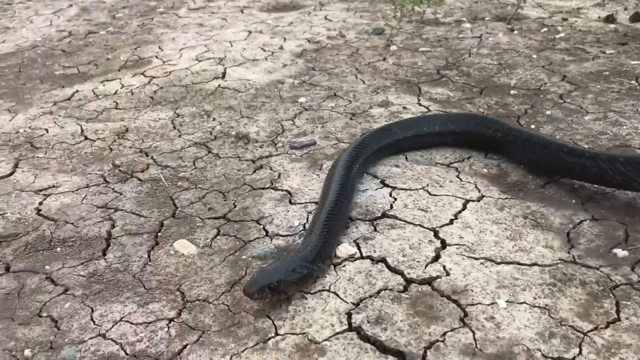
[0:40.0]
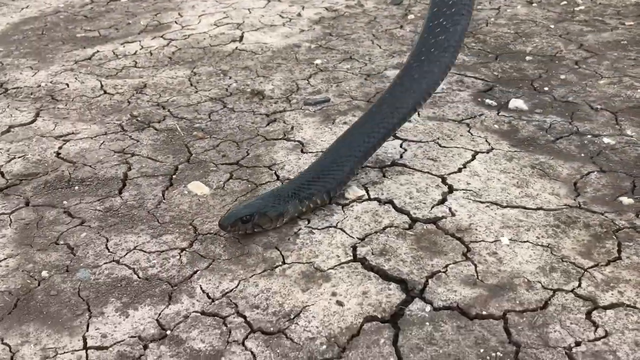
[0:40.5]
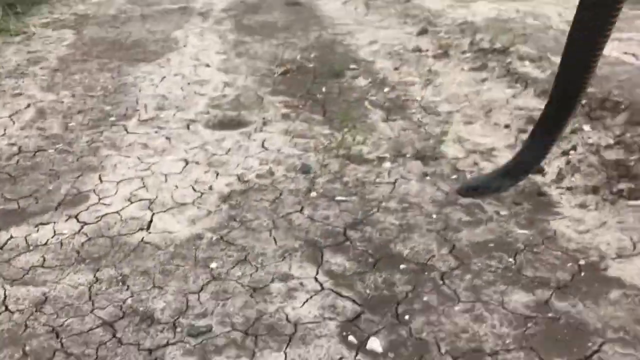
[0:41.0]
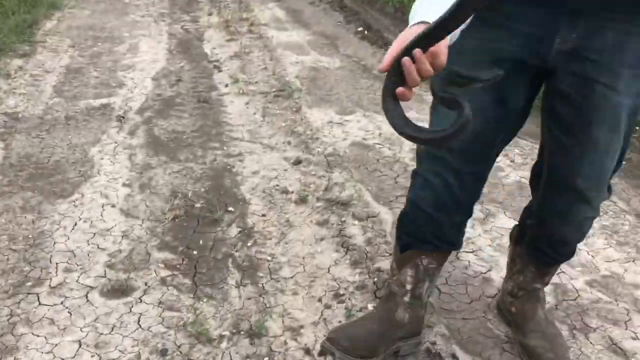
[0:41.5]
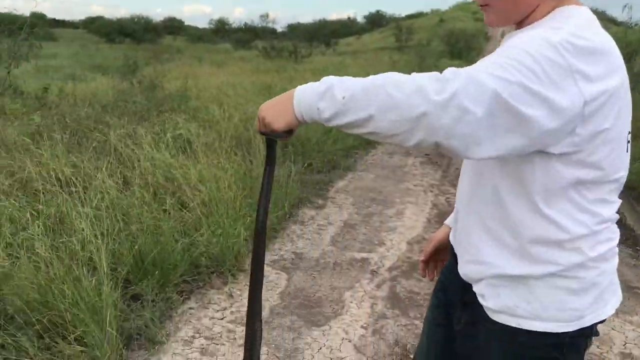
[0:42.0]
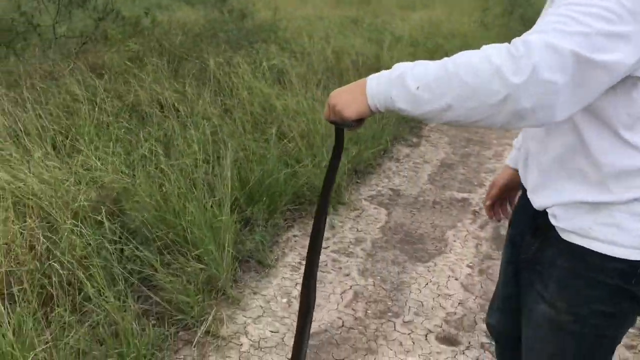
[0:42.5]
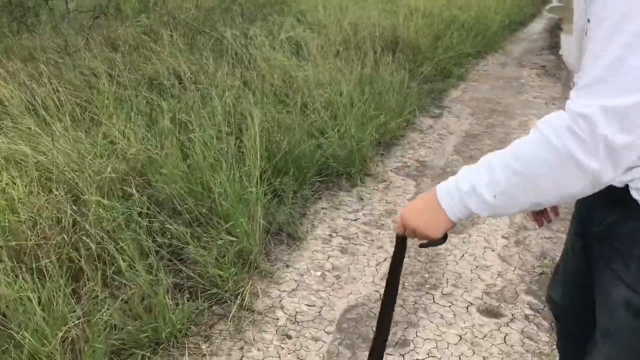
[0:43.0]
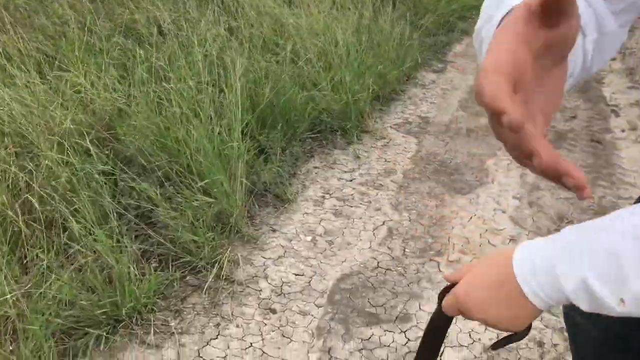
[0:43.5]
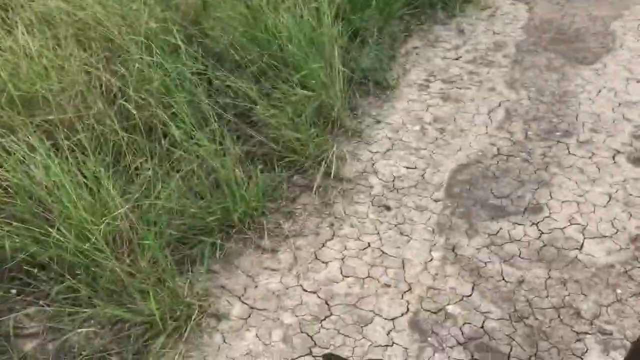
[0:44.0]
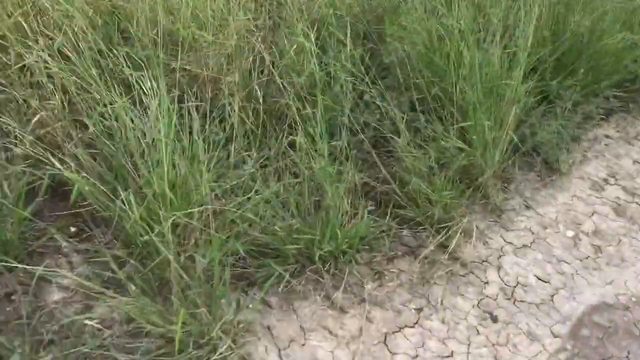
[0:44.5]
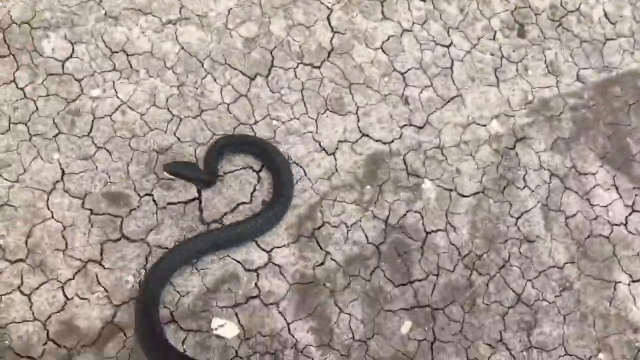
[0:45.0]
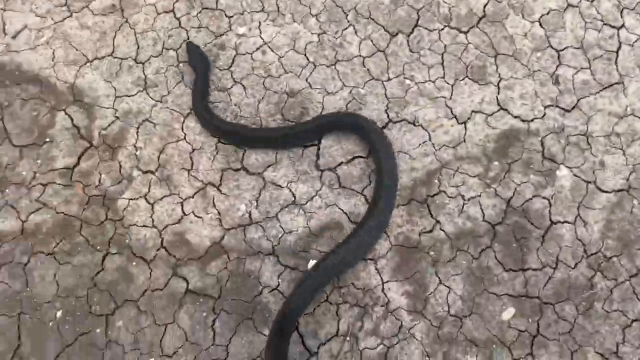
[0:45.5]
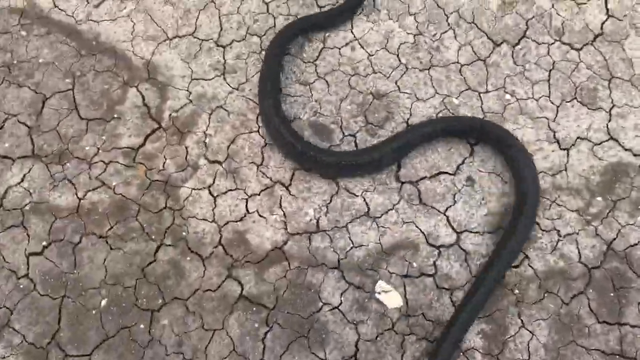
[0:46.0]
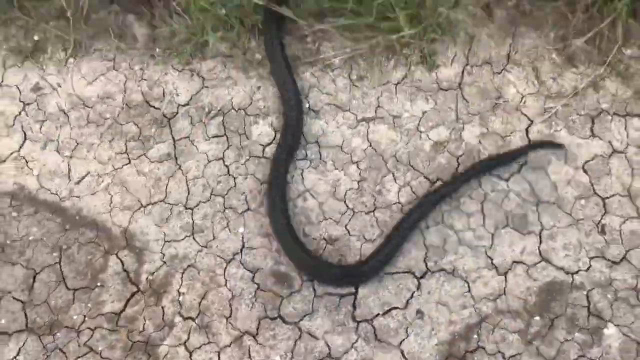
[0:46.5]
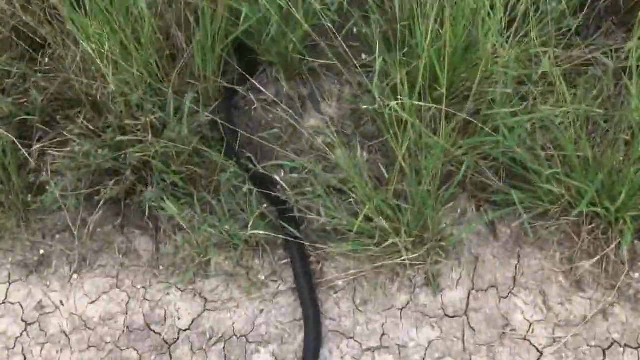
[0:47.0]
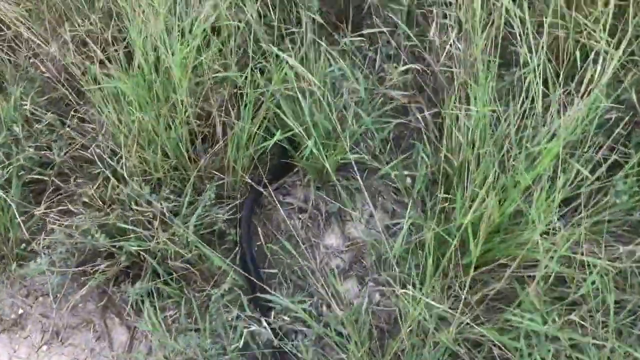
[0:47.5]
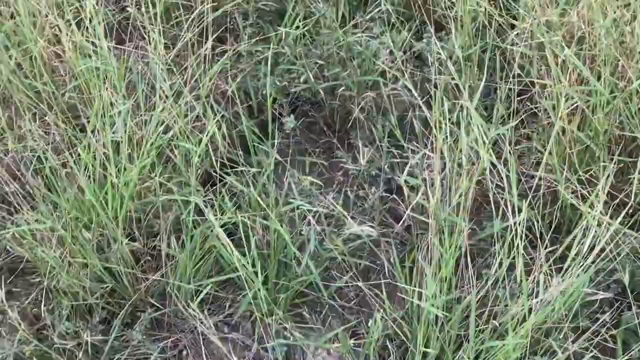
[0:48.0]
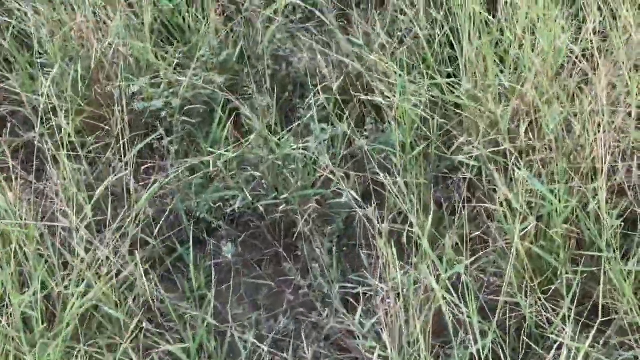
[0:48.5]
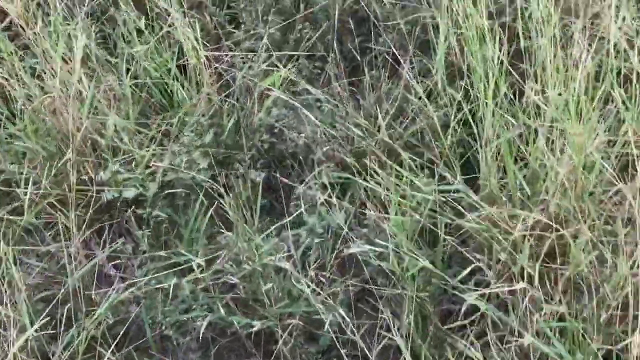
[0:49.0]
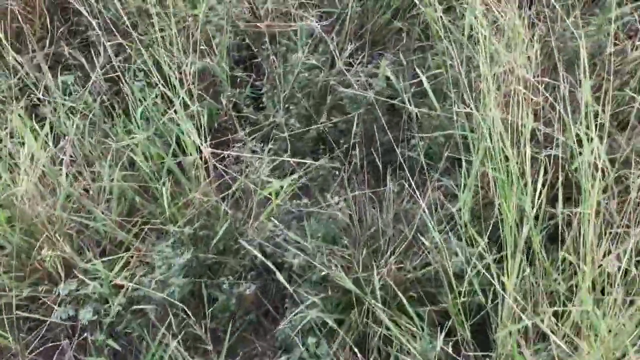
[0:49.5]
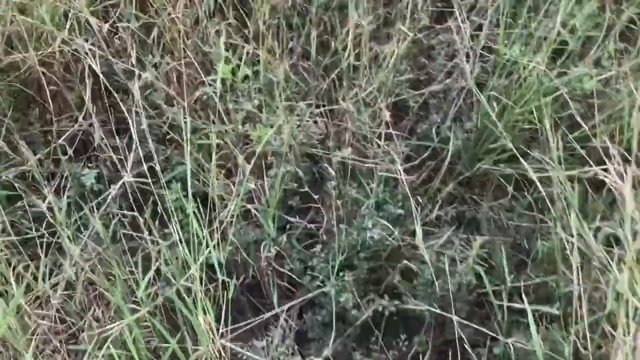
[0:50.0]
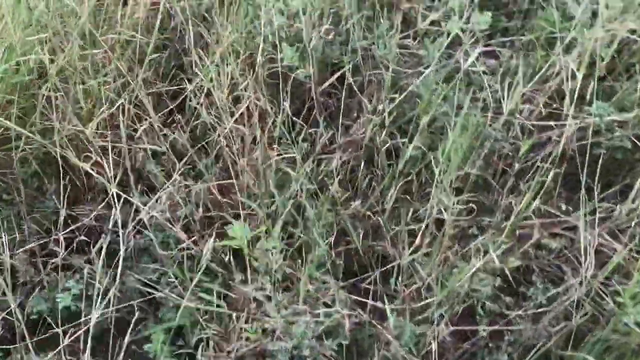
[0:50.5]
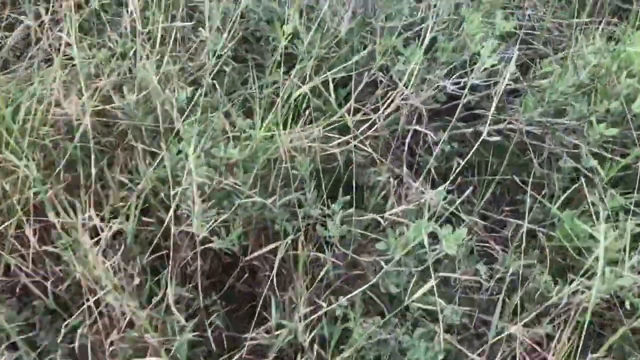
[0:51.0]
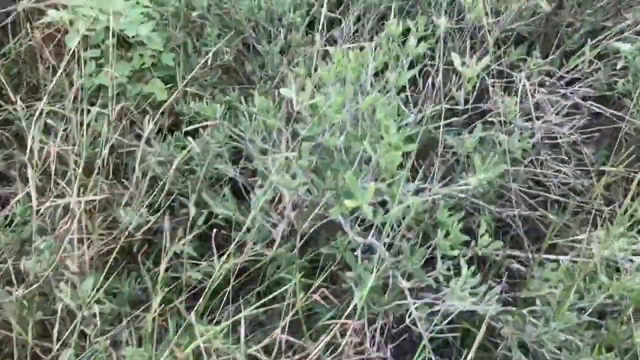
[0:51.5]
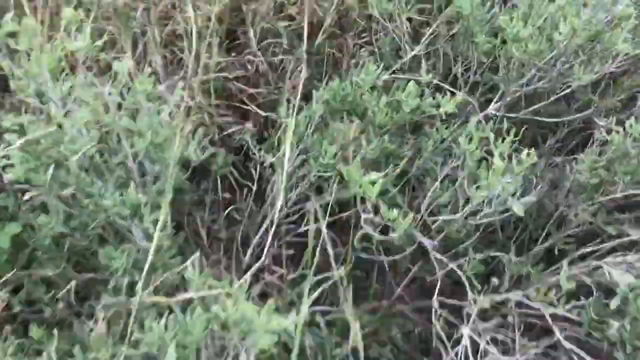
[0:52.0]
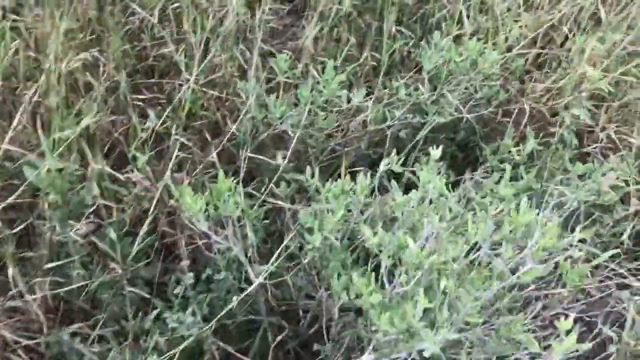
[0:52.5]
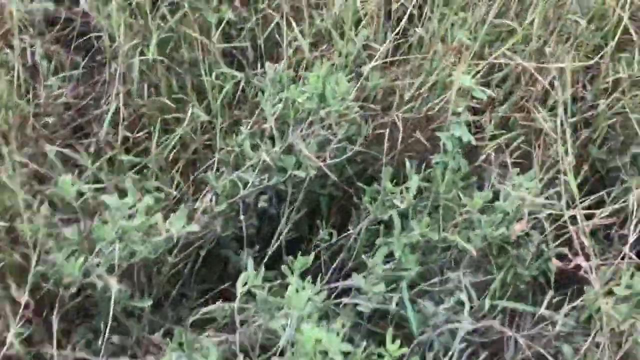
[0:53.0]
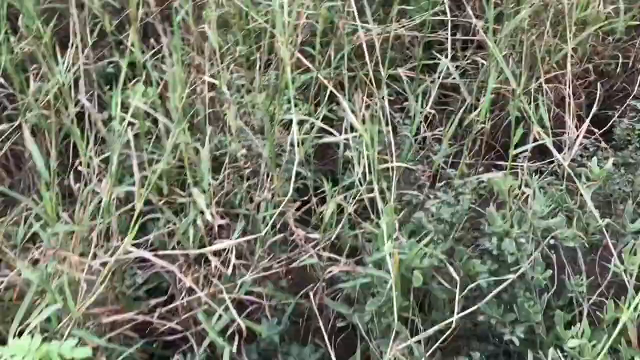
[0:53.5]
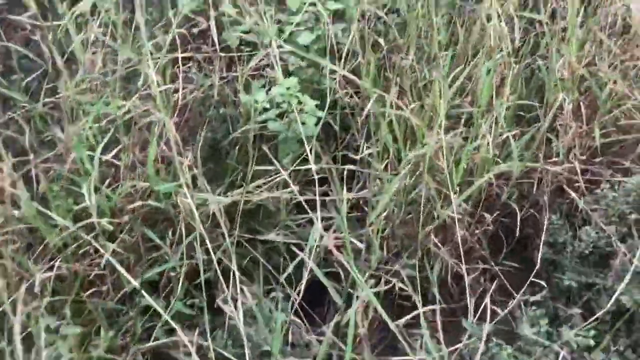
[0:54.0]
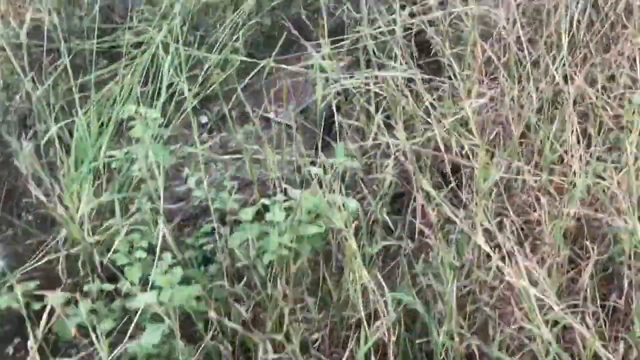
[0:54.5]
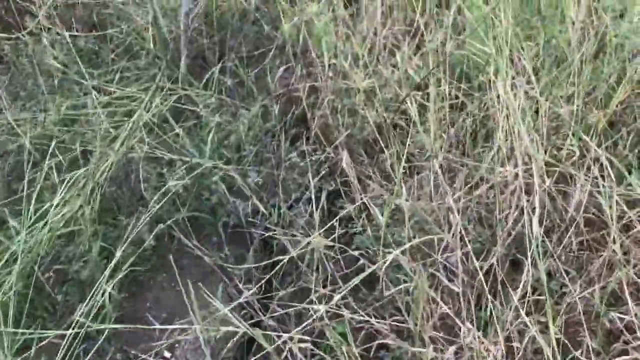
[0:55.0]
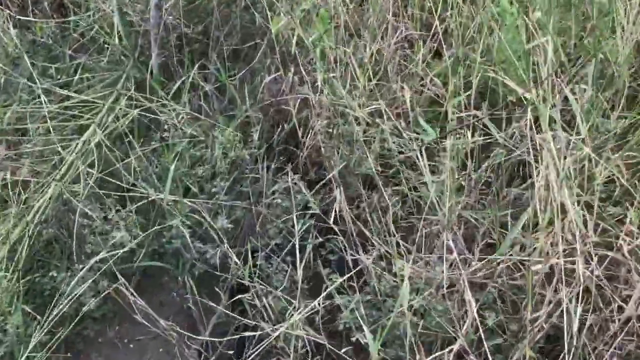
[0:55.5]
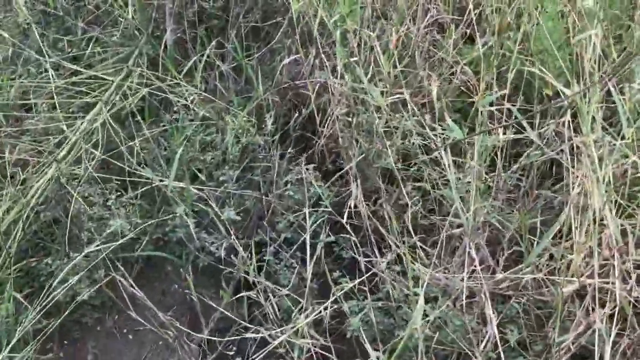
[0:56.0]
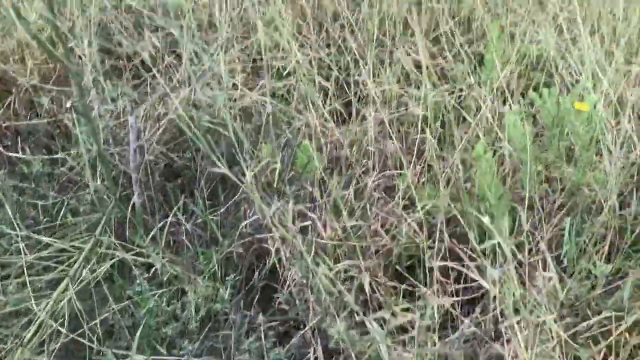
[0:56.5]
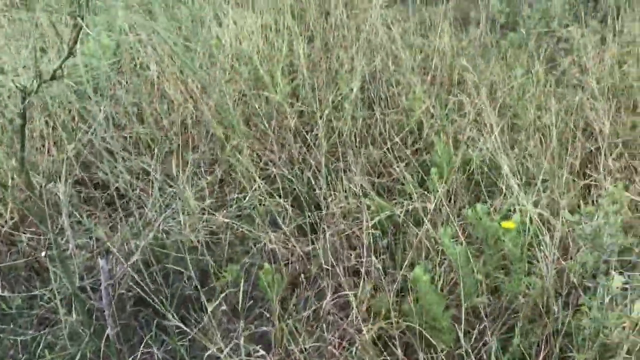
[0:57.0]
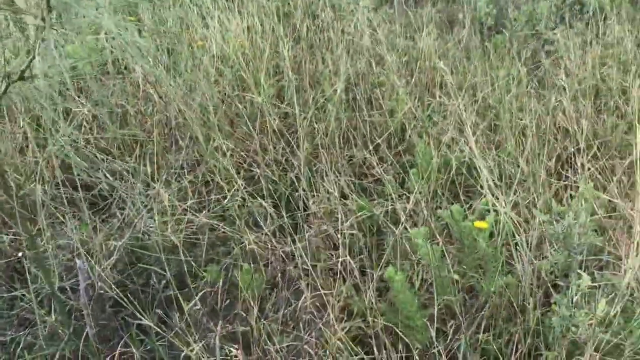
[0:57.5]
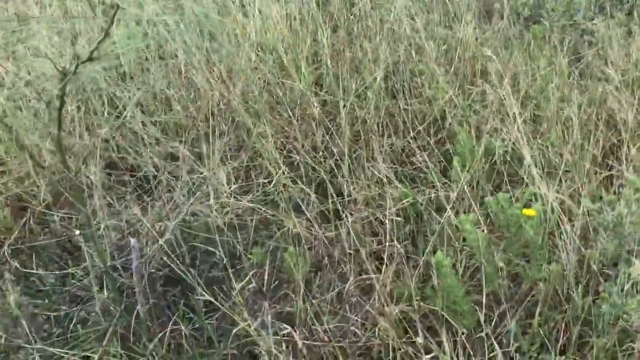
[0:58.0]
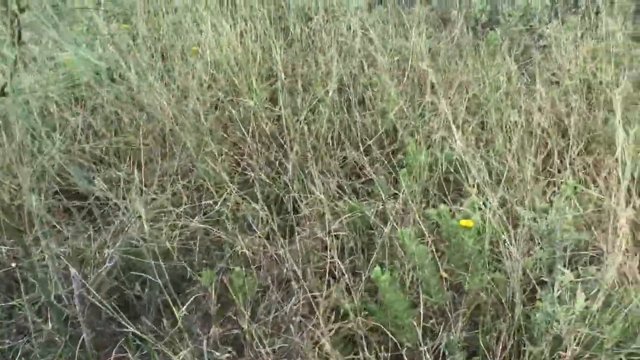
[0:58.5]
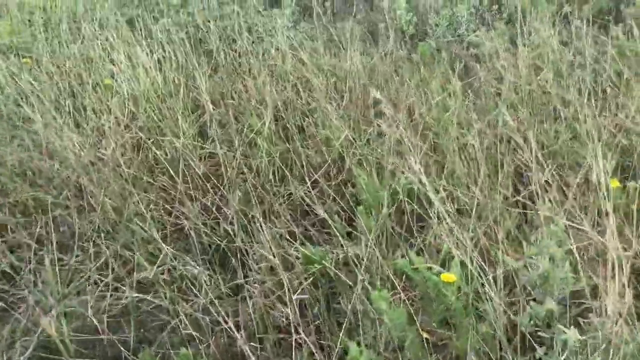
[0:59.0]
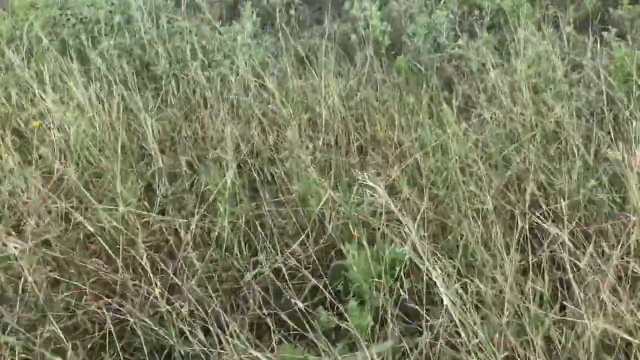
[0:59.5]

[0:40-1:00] The kid in the white shirt, jeans and boots still handles the black snake, then lets it go into the tall grass. The camera tries to follow it, but the snake appears to be out of view in the tall grass. He reaches for something, possibly the camera, and the camera then pans over the tall grass, a mix of green and dead grass with small yellow flowers popping up intermittently. The snake hides in the grass and disappears from sight.